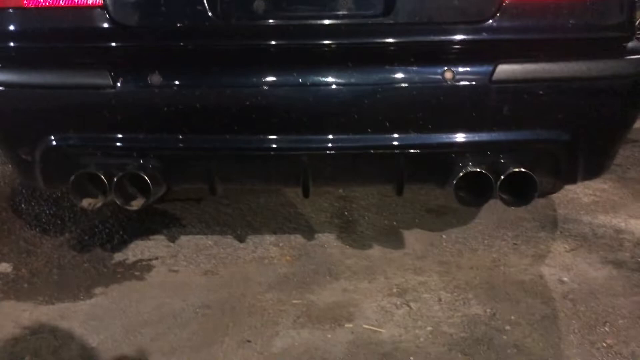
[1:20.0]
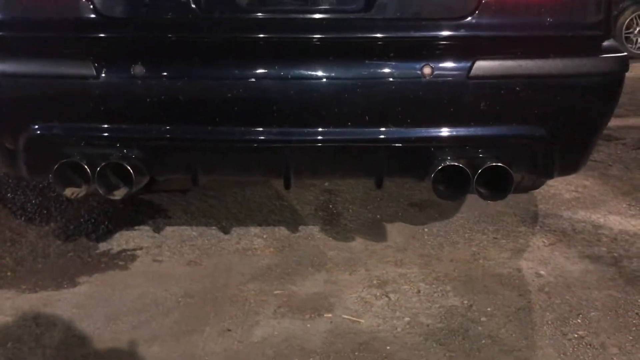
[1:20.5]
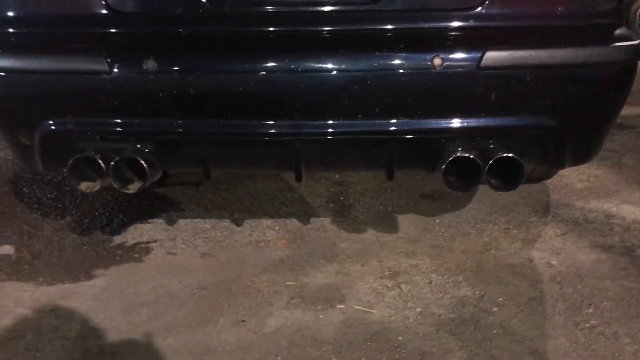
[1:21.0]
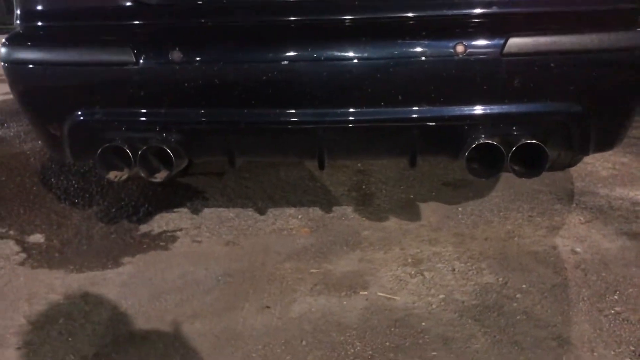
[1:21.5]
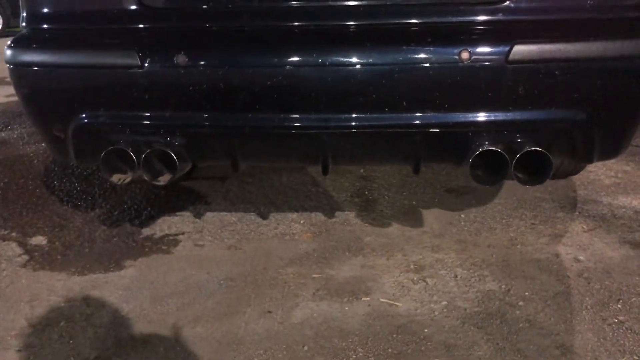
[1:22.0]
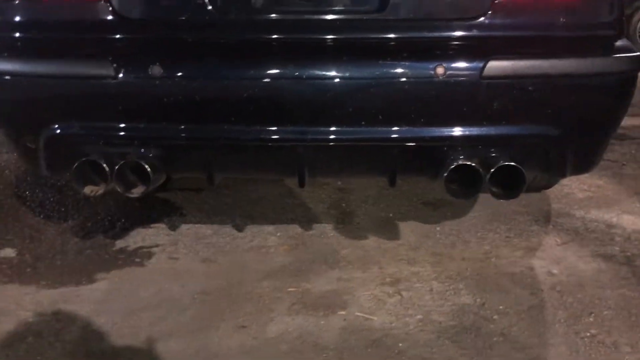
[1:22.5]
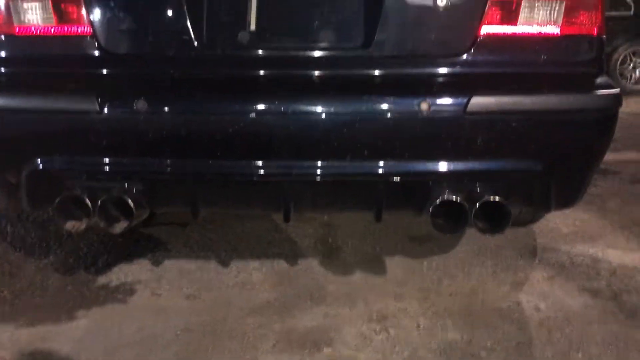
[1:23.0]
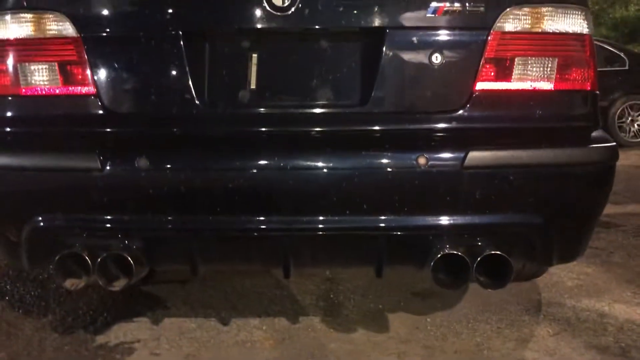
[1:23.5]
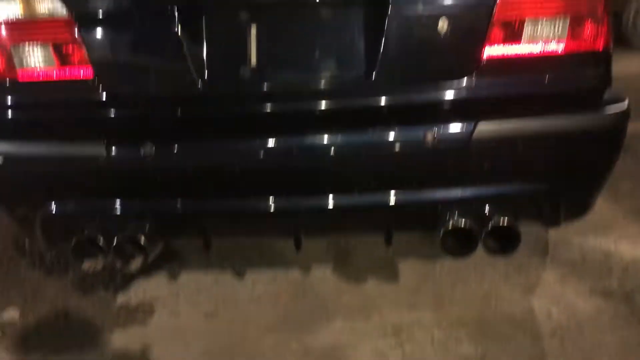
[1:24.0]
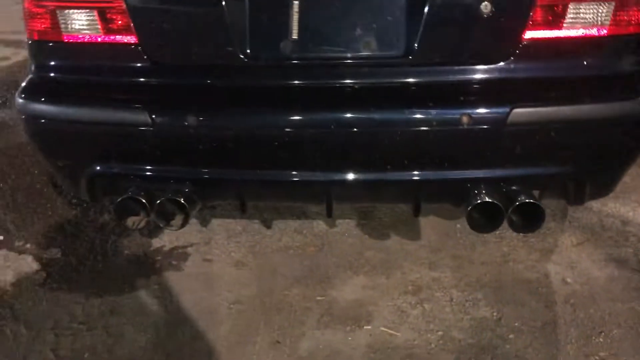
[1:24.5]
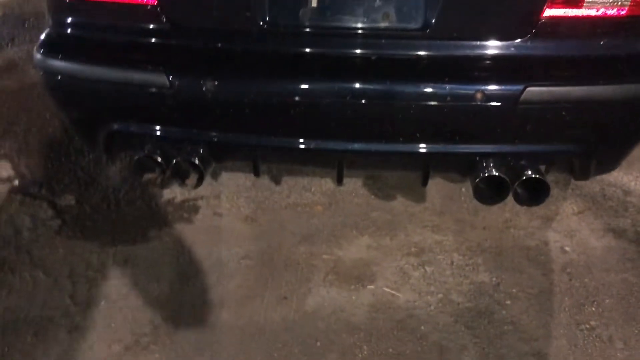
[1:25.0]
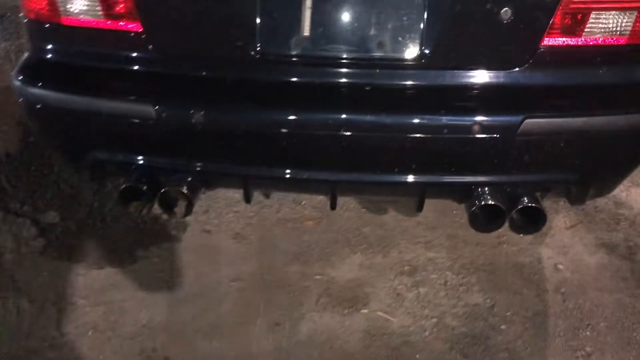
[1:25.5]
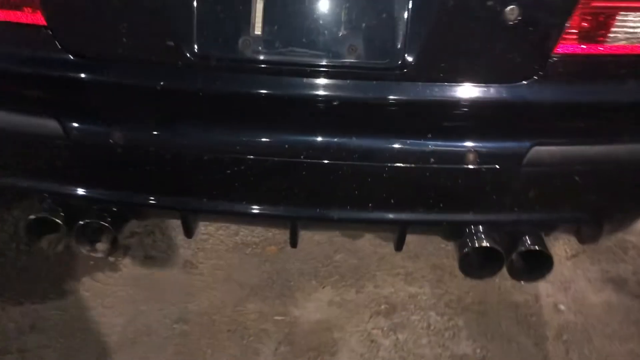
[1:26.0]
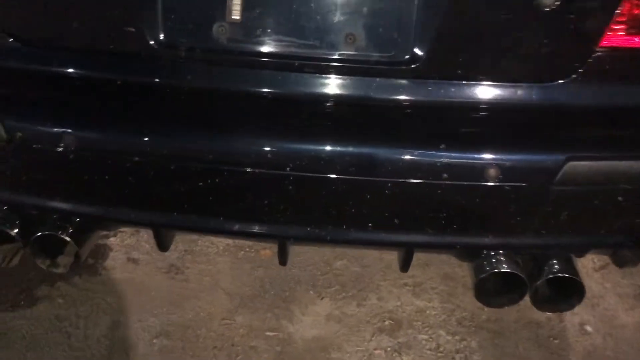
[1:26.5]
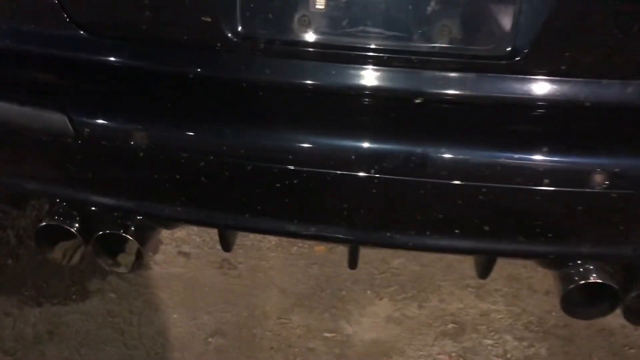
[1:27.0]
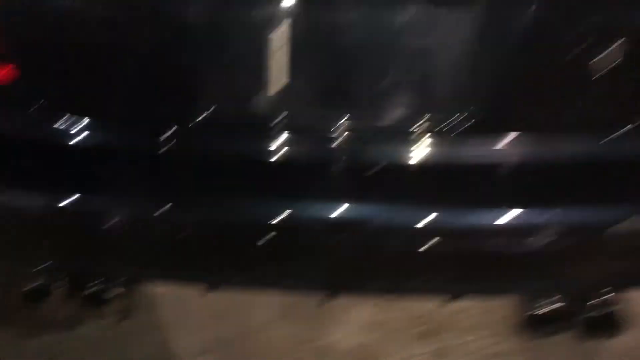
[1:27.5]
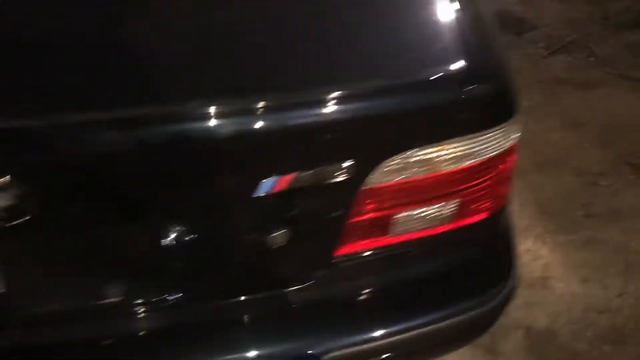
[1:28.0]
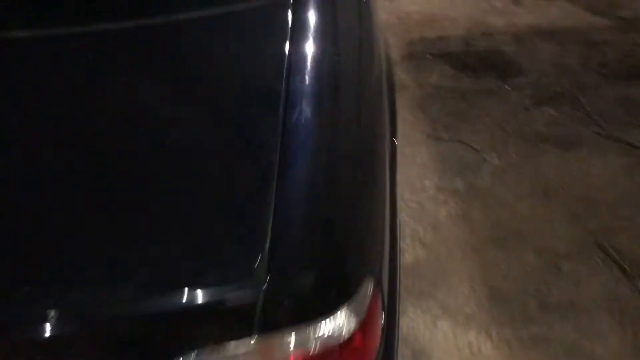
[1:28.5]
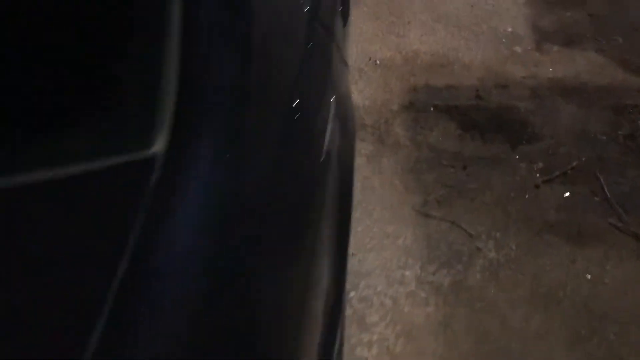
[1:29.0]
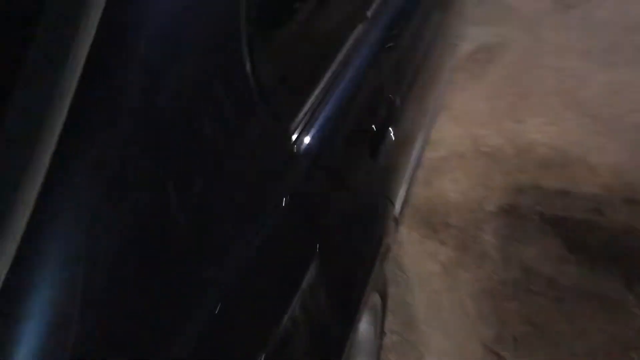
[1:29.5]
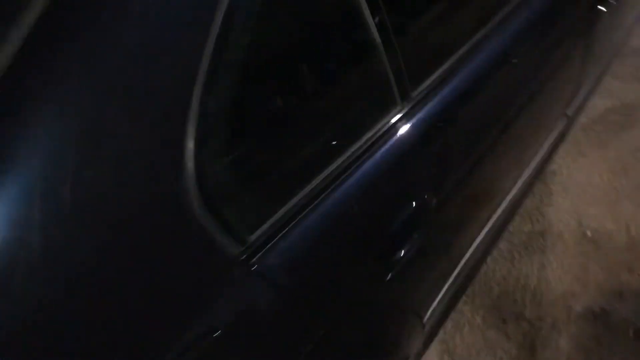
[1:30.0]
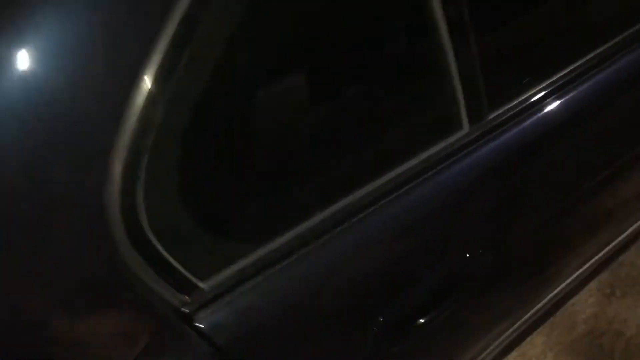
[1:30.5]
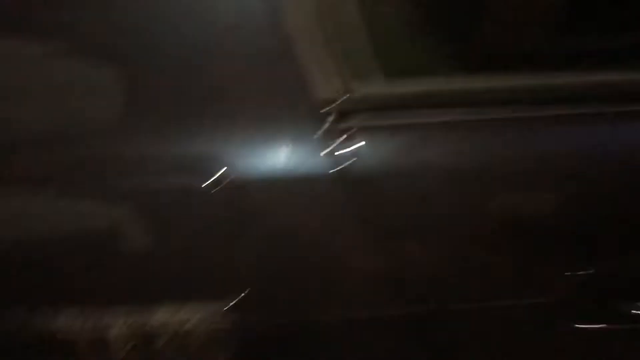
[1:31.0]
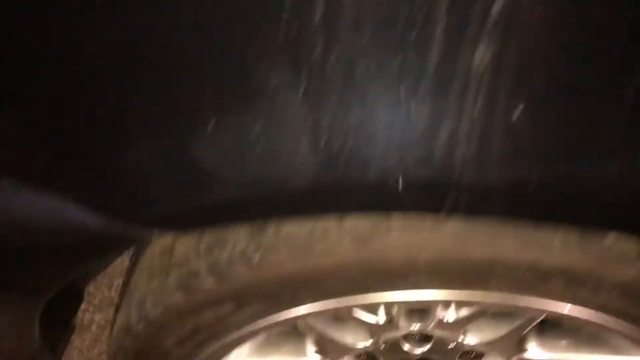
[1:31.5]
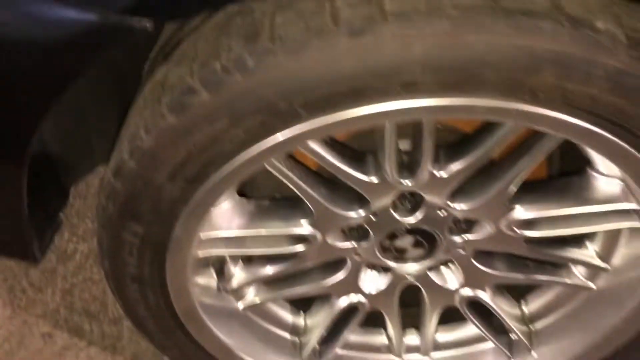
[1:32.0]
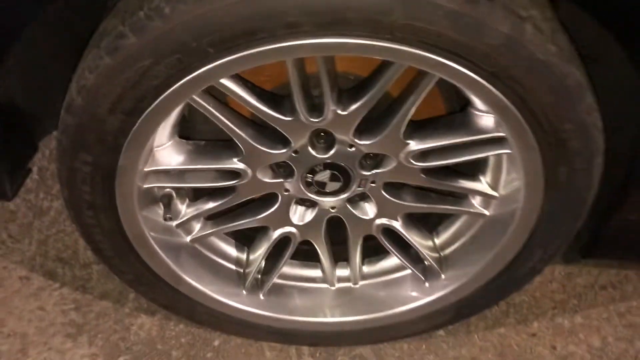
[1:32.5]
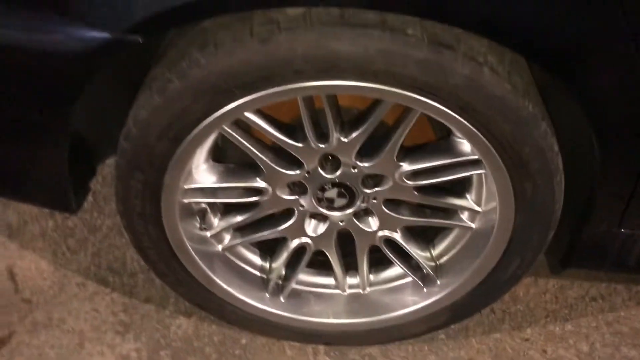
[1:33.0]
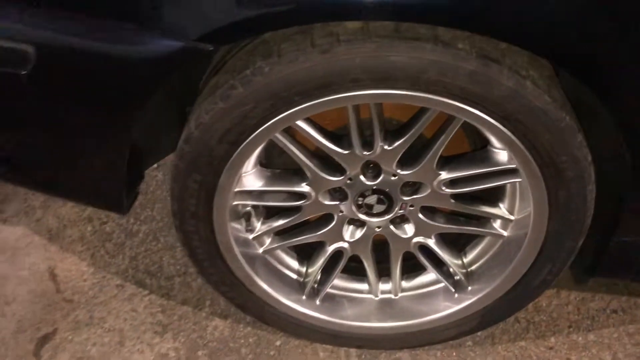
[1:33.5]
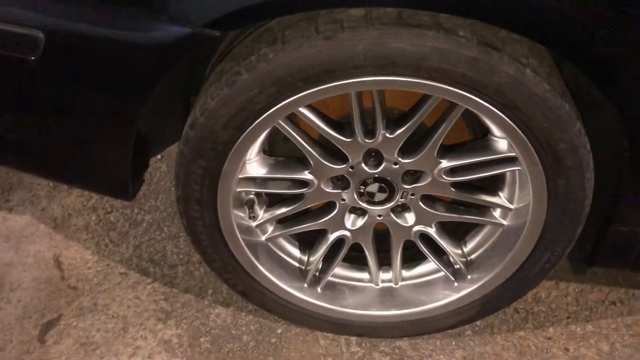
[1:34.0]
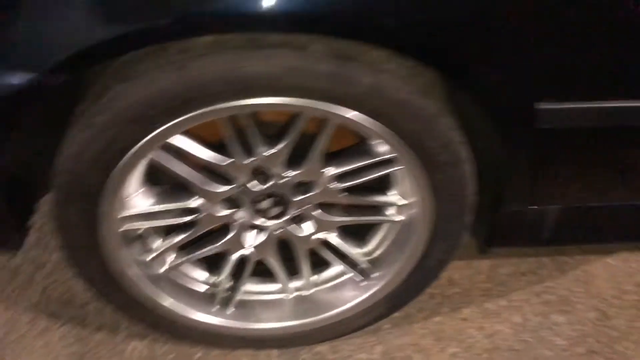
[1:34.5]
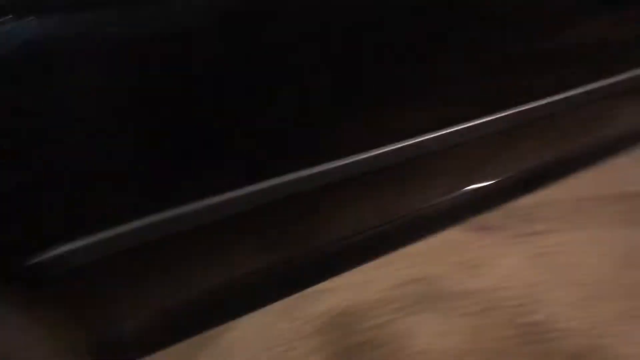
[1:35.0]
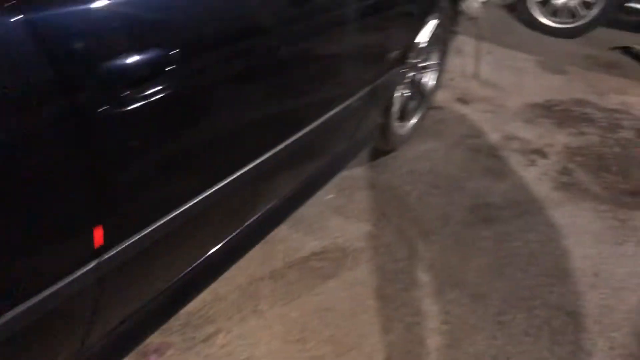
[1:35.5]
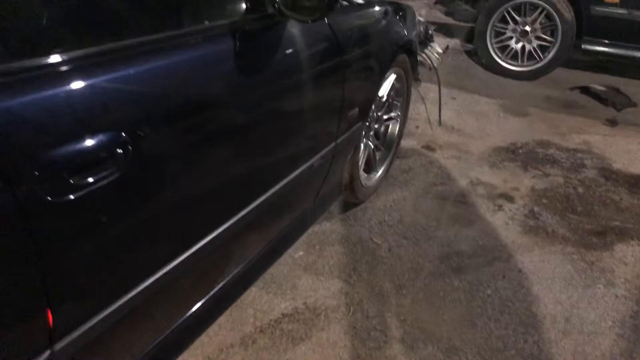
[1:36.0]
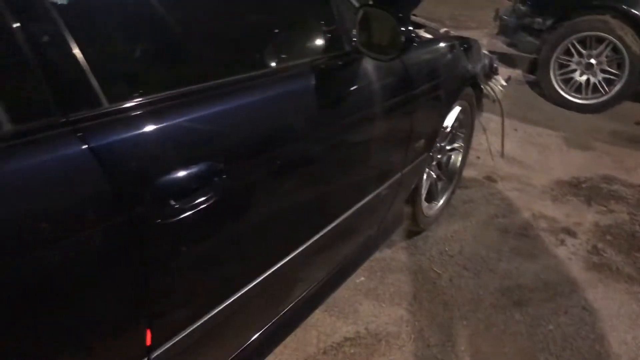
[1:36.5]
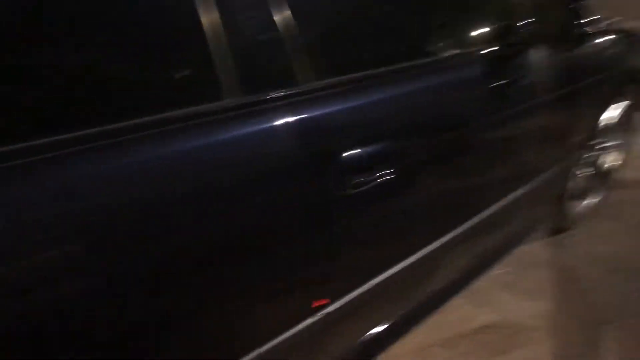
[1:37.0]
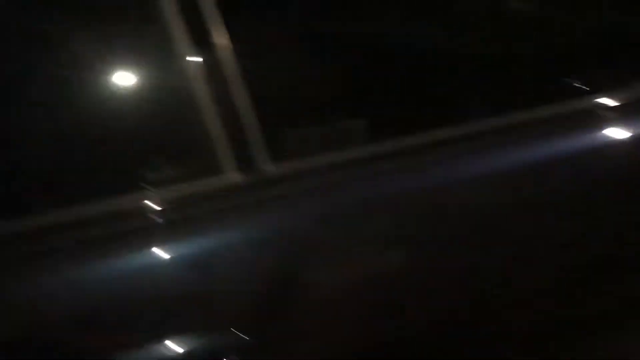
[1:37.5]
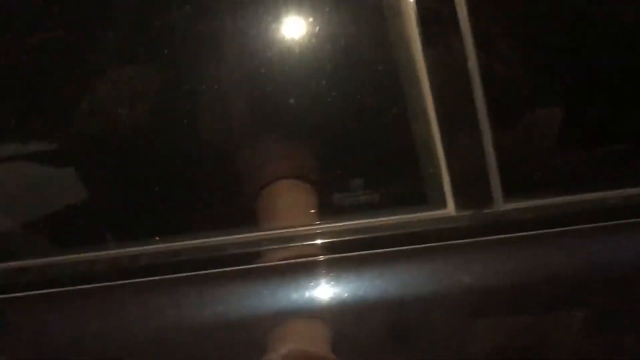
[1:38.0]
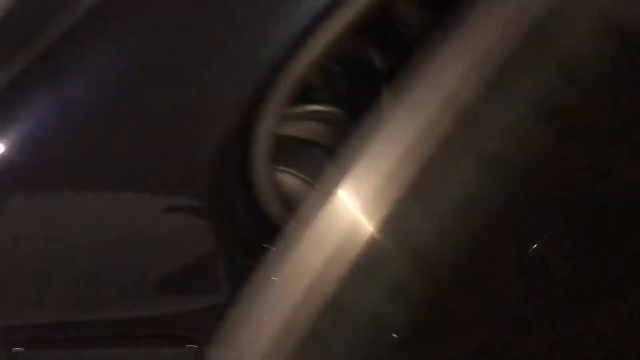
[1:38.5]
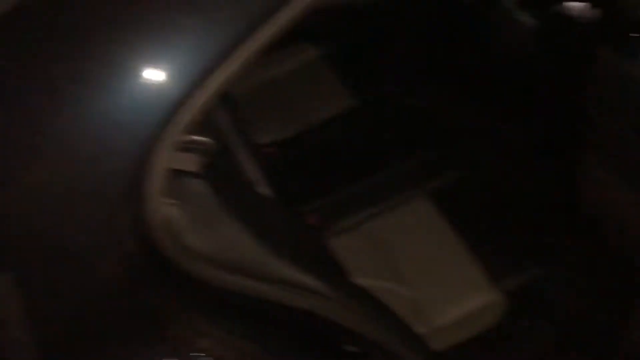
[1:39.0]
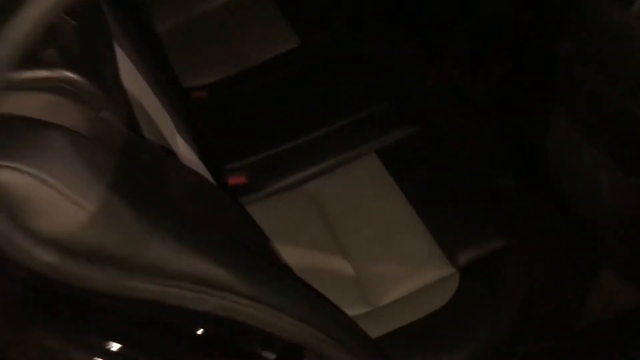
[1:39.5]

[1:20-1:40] The quad tailpipes have silver tips and are mounted on the diffuser. Rear sensors are visible on the rear bumper. The BMW's paint has a crystal-like effect, and it has silver wheels. The person opens the rear passenger door on the other side and shows the interior from that side. The rear boot has a keyhole for opening it with a key. The rear wheels have disc brakes, visible through the wheel spokes. The windows are tinted. The wheels are chrome coloured with a BMW logo as the center cap. As the person moves to the other side of the vehicle, showing the back, the doors are seen to match the body color of this BMW M Sport.